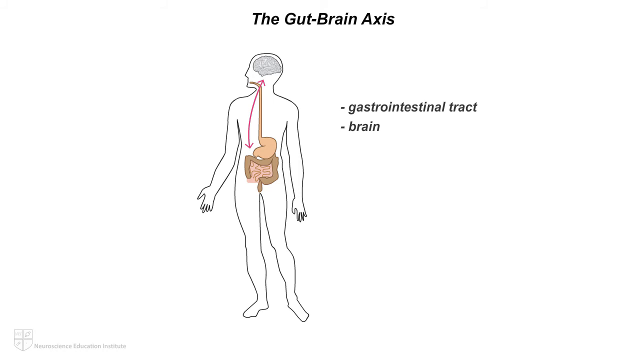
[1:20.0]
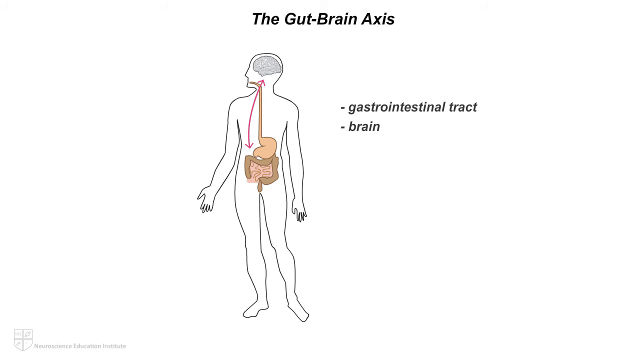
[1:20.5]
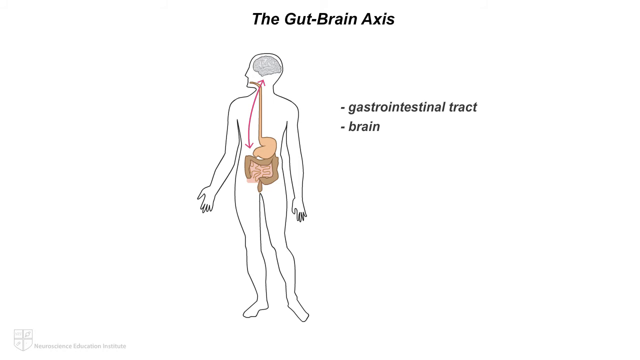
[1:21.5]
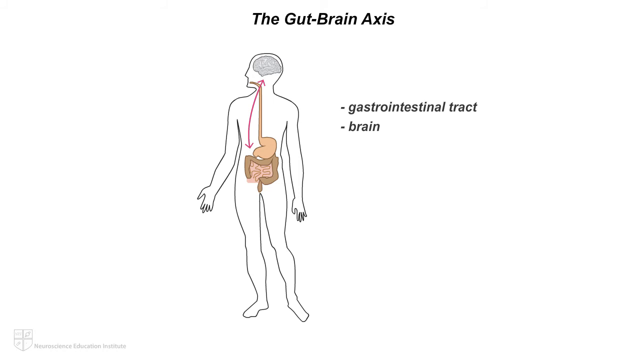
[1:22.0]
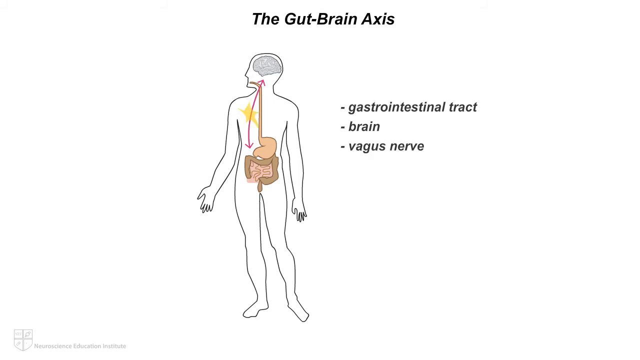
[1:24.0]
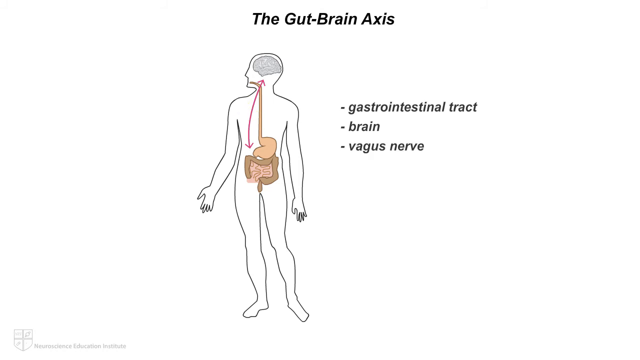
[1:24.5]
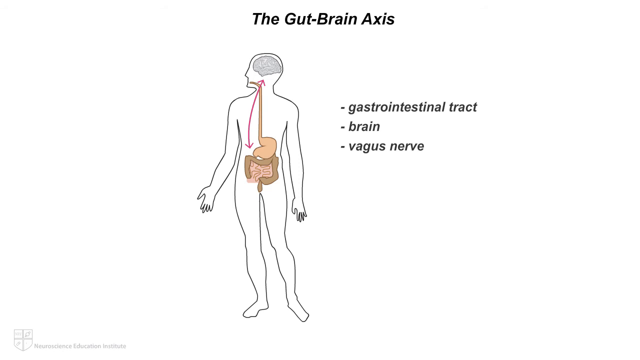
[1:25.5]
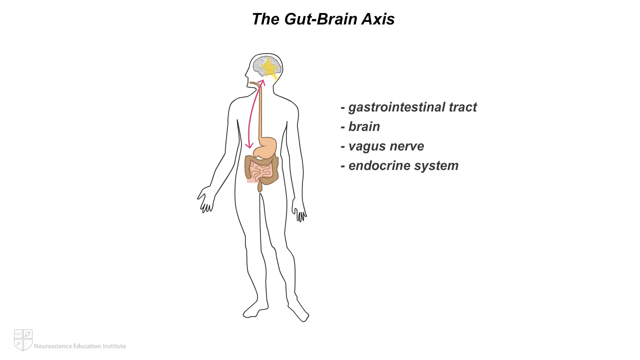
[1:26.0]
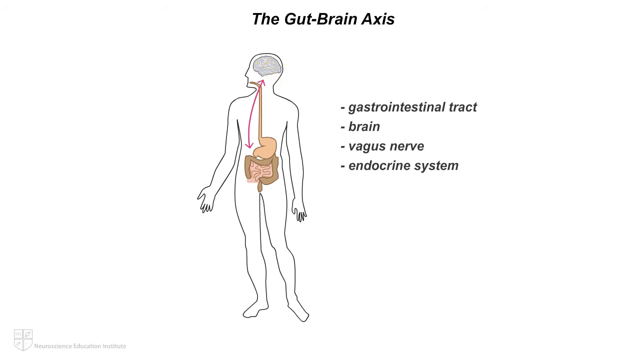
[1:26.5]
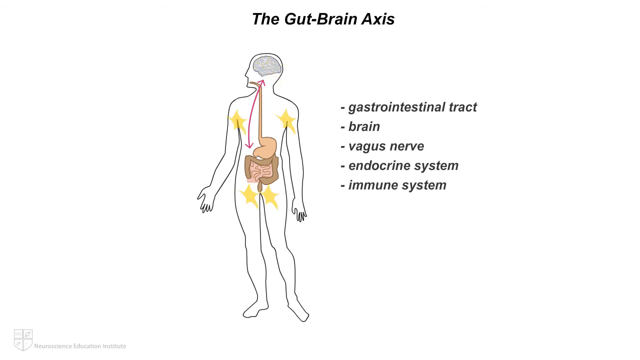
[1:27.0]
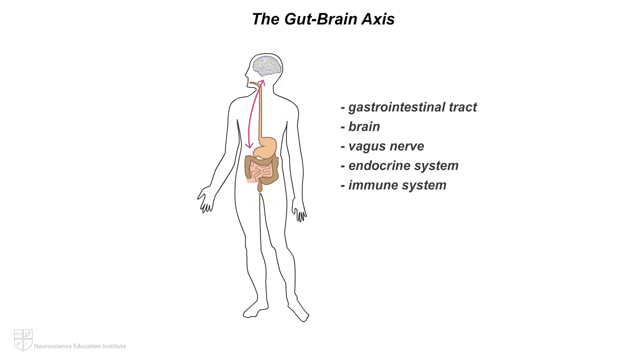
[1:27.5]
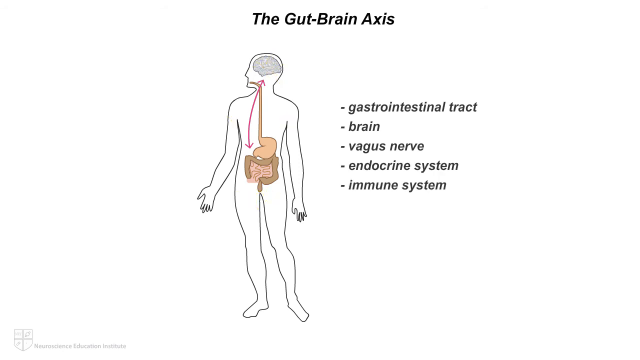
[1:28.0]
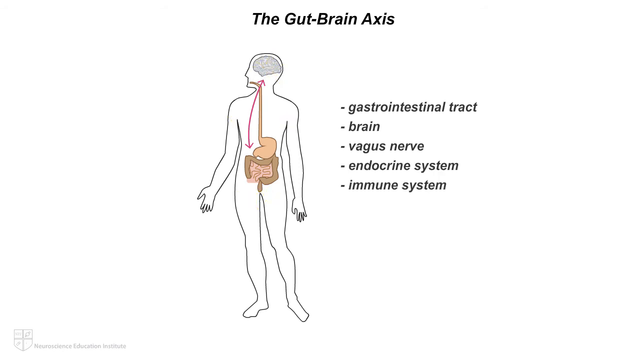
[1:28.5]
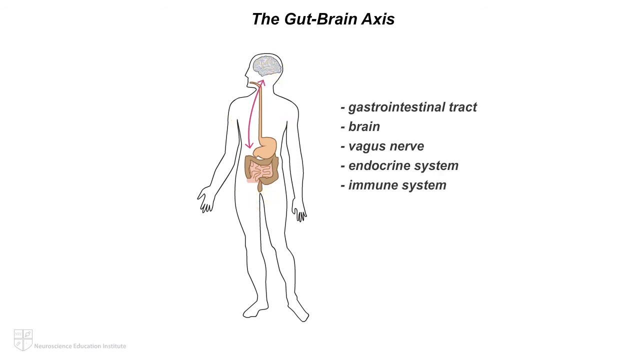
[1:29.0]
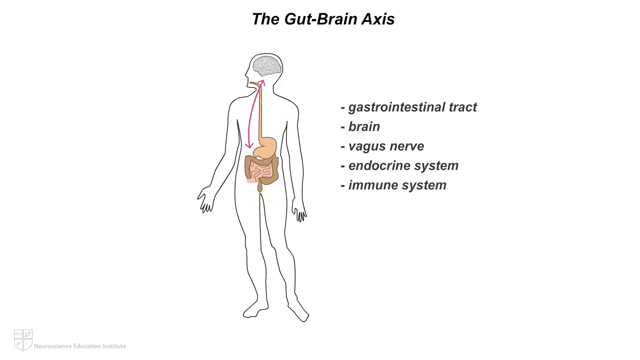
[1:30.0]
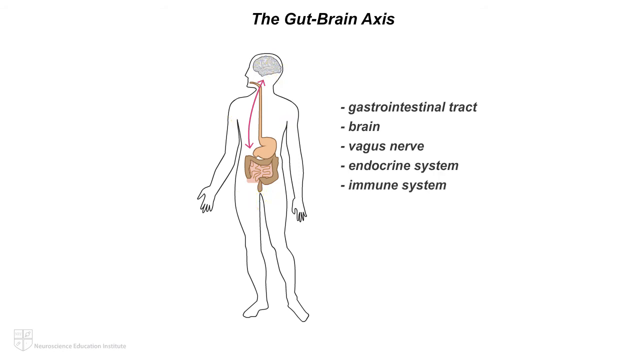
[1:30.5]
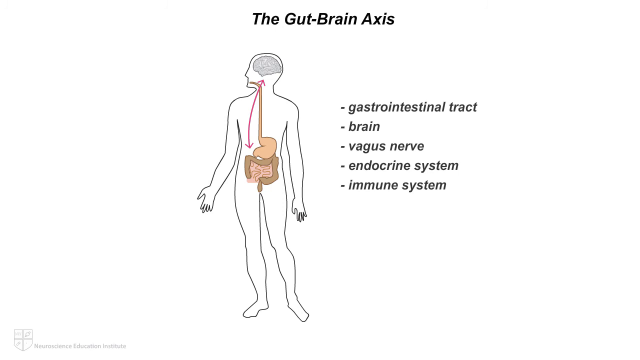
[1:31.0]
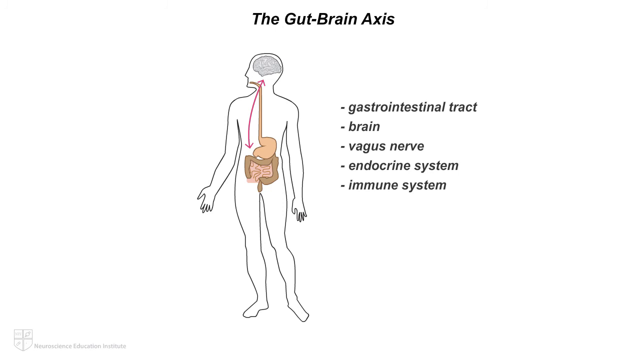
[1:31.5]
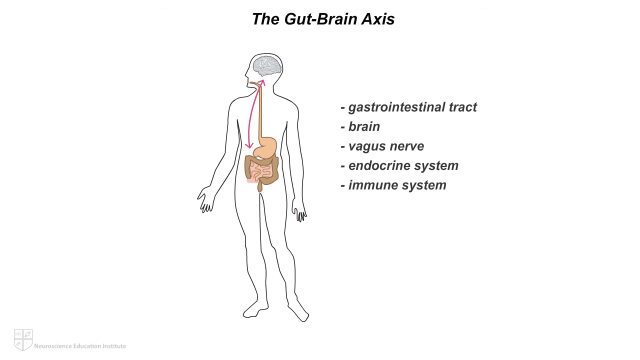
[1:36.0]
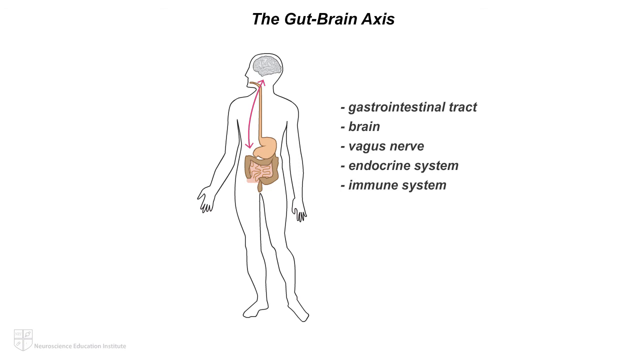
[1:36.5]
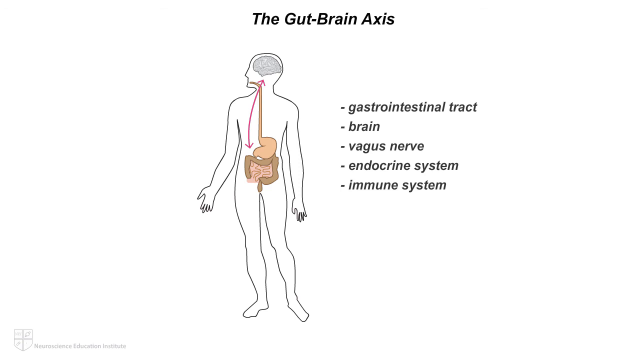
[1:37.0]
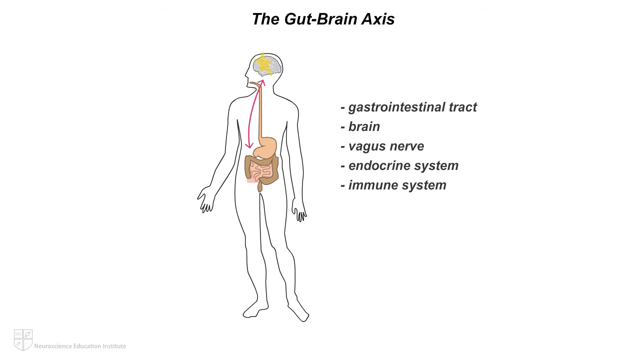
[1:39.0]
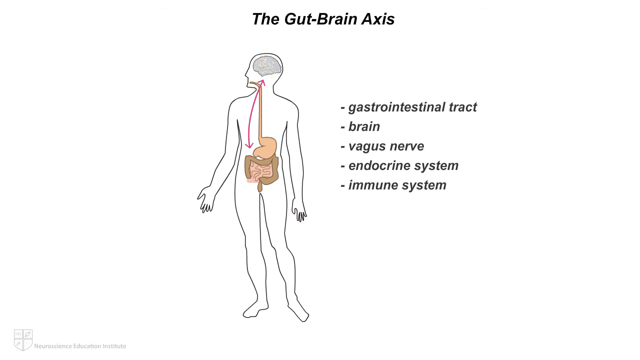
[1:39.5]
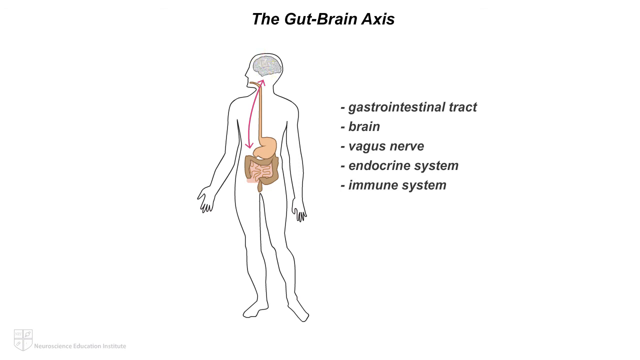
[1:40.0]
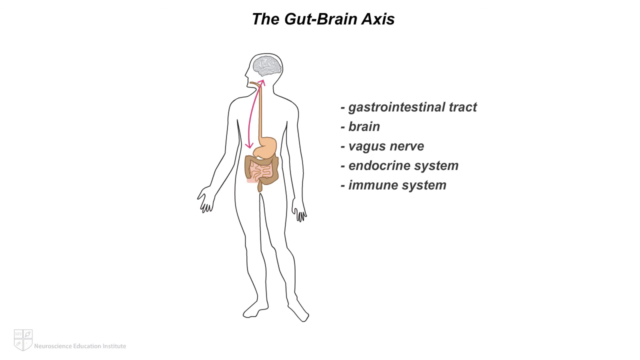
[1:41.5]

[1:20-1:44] An outline of a human being faces toward the left, palms facing the camera. Inside the outline is an x-ray view of the digestive system, including the esophagus, stomach and intestine, as well as the brain. Text at the very top reads "the gut-brain axis", and text to the right of the graphic of the person reads "gastrointestinal tract, brain, vagus nerve, endocrine system, immune system". The video slowly goes through everything listed, highlighting the listed section inside the outline of the body. The background is solid white, and the video remains on this image for some time. A red line comes from the stomach going down toward the large intestine, with an arrow on the line pointing toward the brain and an arrow on the other end pointing toward the person's digestive system.